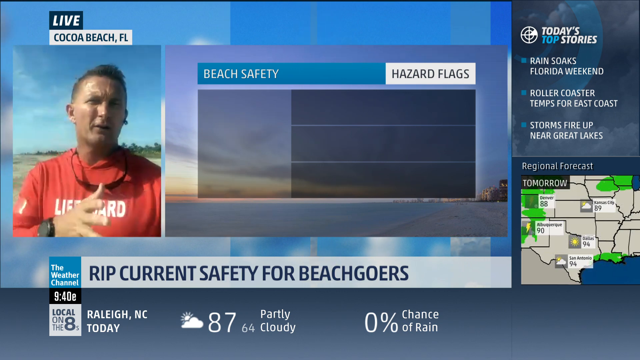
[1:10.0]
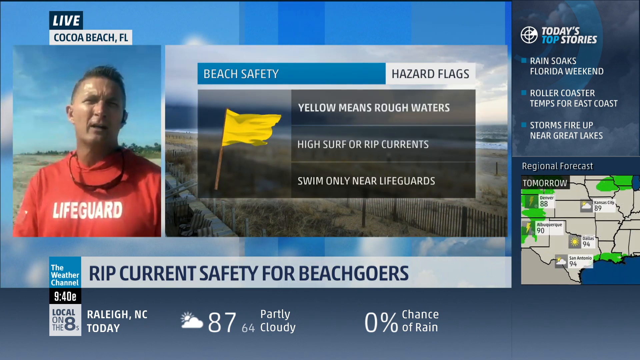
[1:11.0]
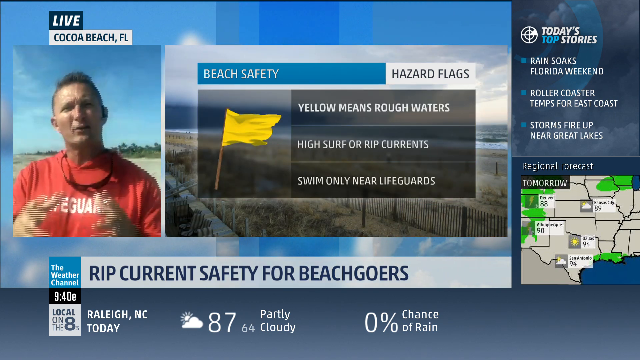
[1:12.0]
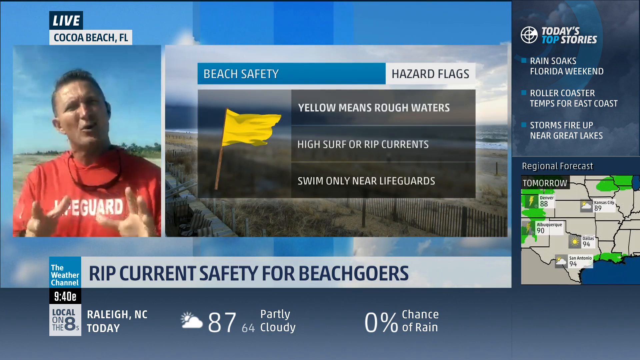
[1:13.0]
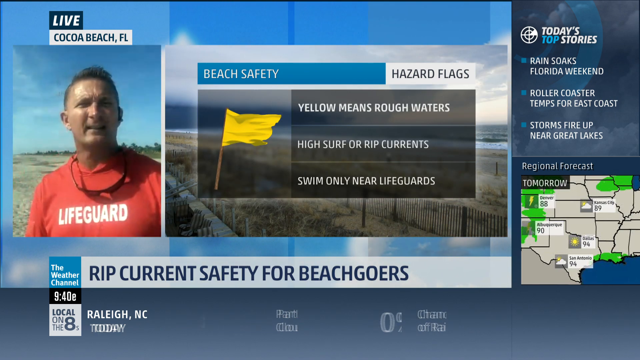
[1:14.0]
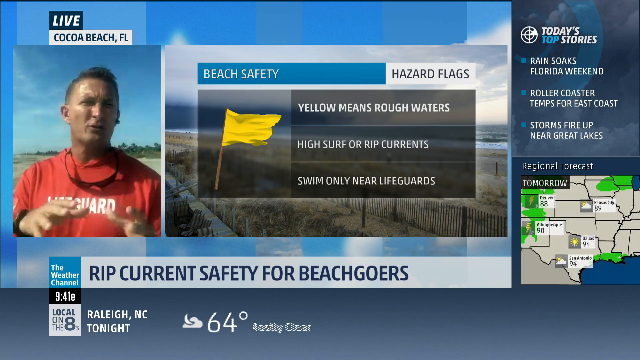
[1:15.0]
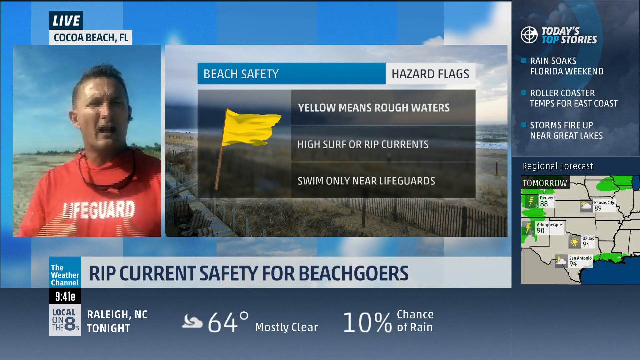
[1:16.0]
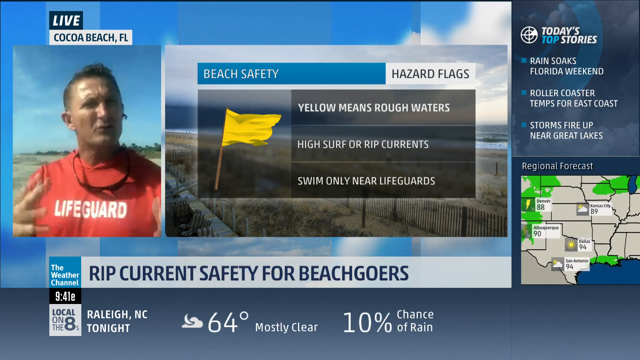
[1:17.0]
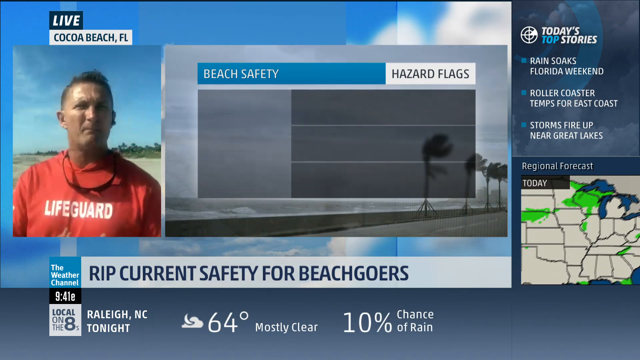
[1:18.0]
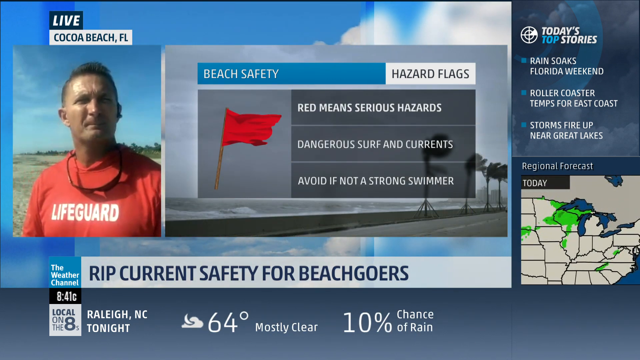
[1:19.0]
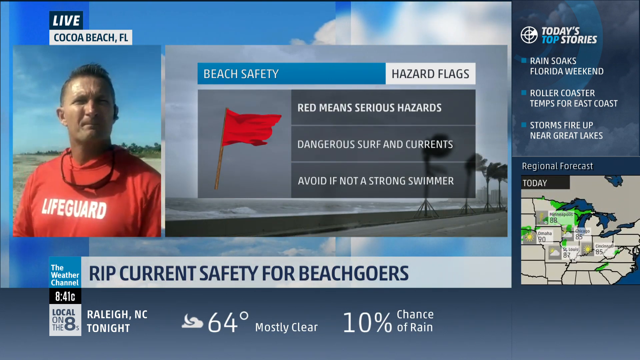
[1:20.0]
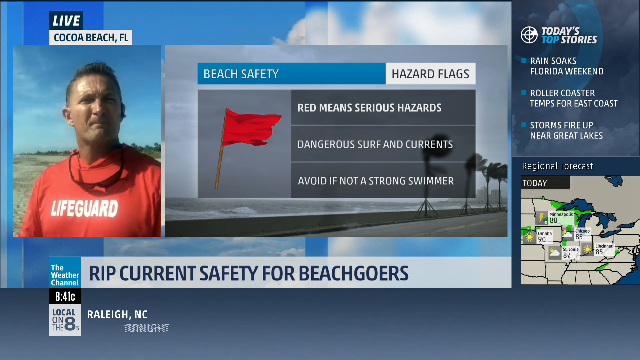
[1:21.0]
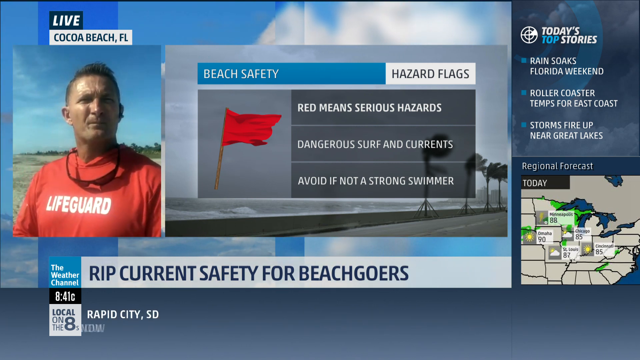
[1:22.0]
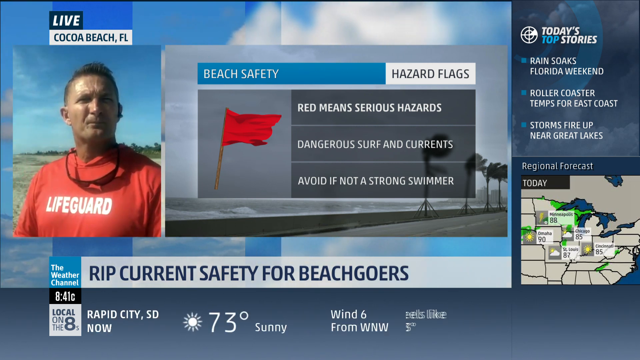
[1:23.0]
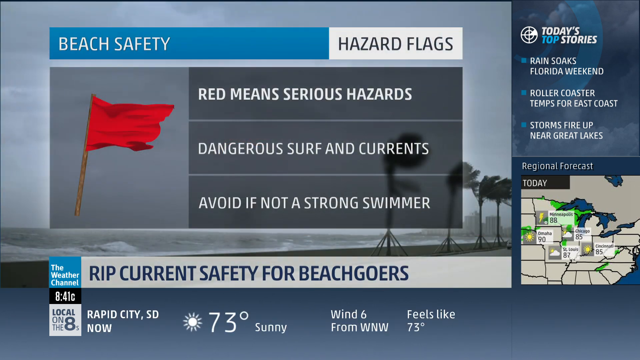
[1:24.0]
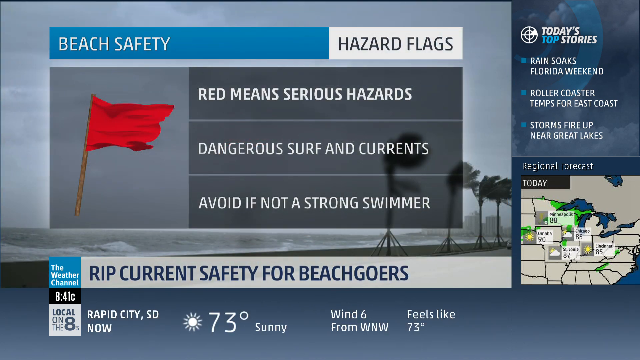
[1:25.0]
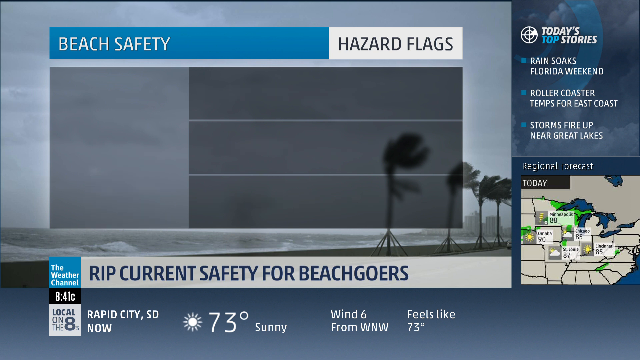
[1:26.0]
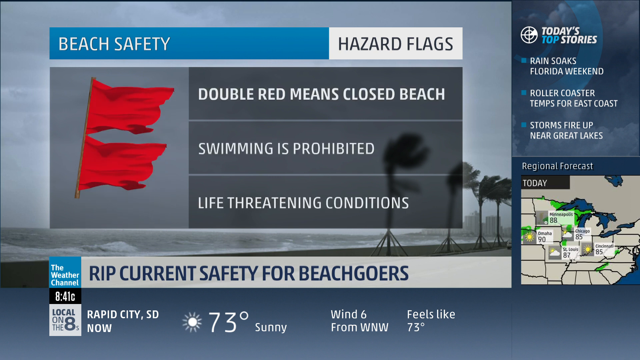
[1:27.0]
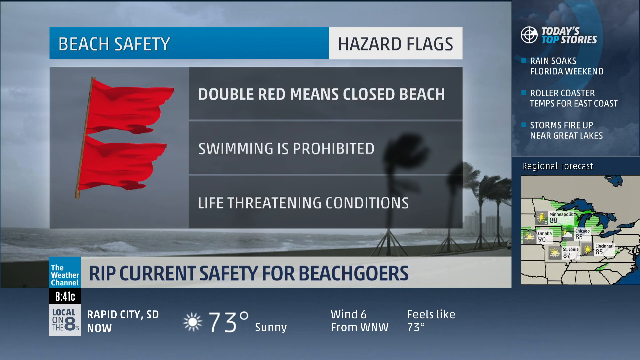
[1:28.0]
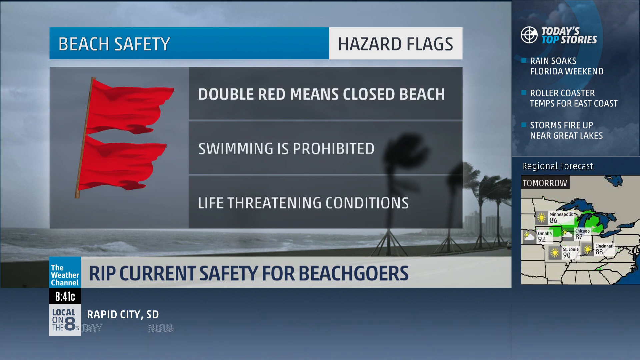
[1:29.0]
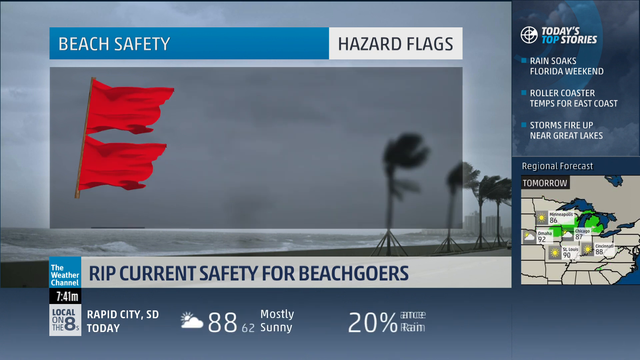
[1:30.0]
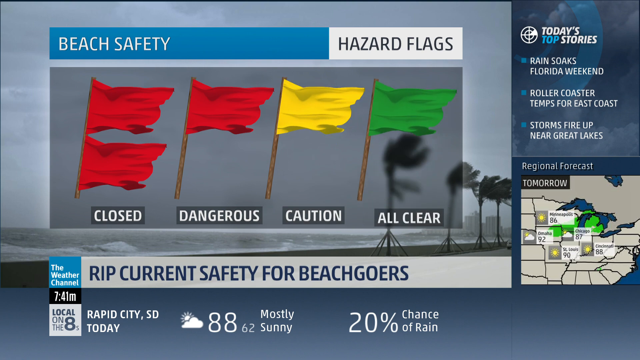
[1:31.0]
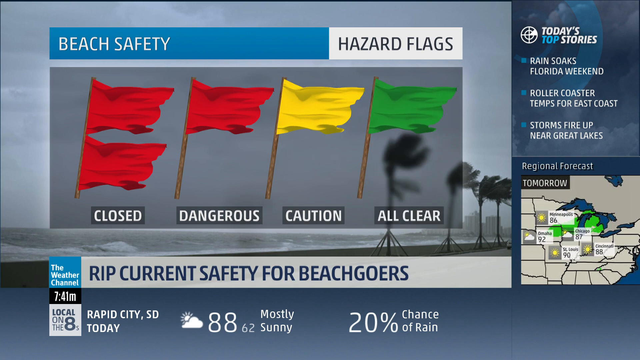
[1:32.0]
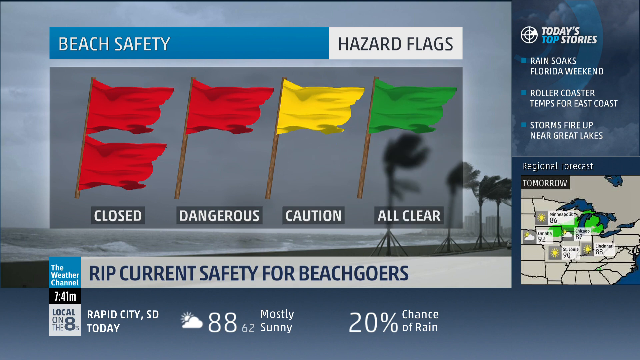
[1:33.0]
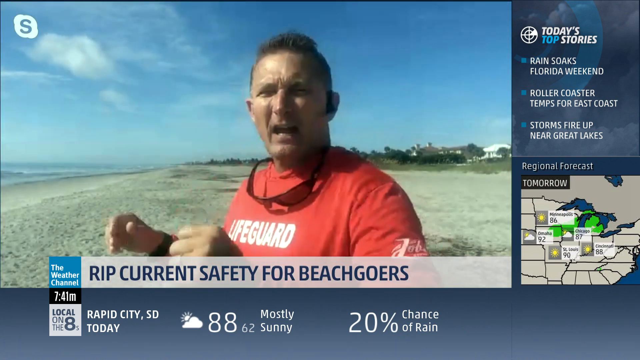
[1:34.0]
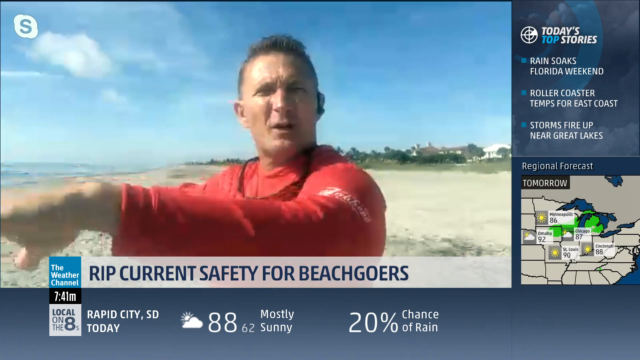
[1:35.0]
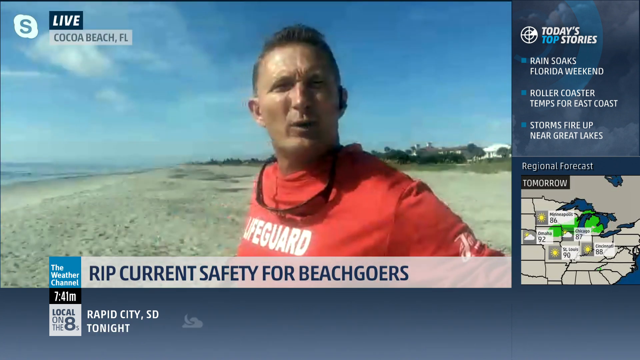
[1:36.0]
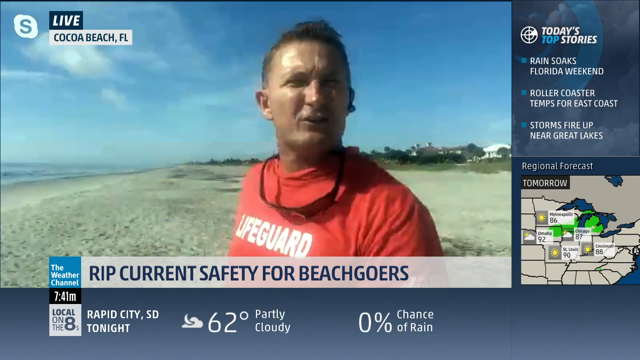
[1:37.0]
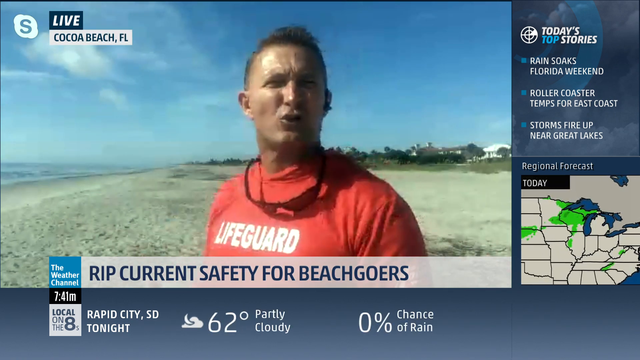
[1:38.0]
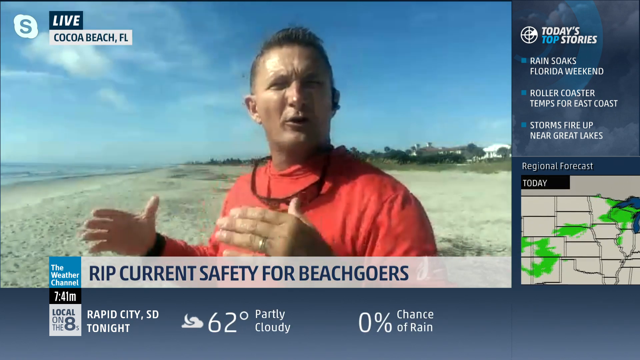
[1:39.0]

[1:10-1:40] A lifeguard is on location live from Cocoa Beach, Florida. The hazard flag shown on screen is yellow, with the text "rough waters, high surf or rip currents, swim only near lifeguards," and the bottom banner reads "rip current safety for beach goers." Then a red flag appears with "serious hazards, dangerous surf and currents, avoid if not a strong swimmer," followed by two red flags: "Double red means closed beach, swimming is prohibited, life-threatening conditions." The double red, red, yellow, and green flags are all displayed. The lifeguard uses his body language and hands to describe the water coming in and how rip currents happen. Then a split screen shows his picture alongside the ocean with the line of people doing the human chain rescue.